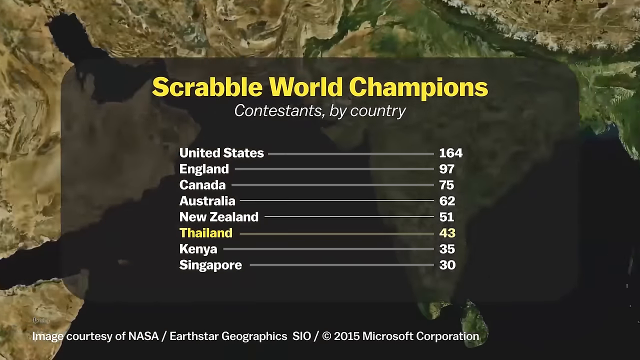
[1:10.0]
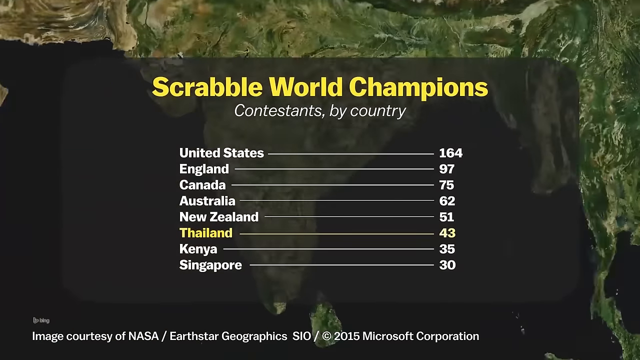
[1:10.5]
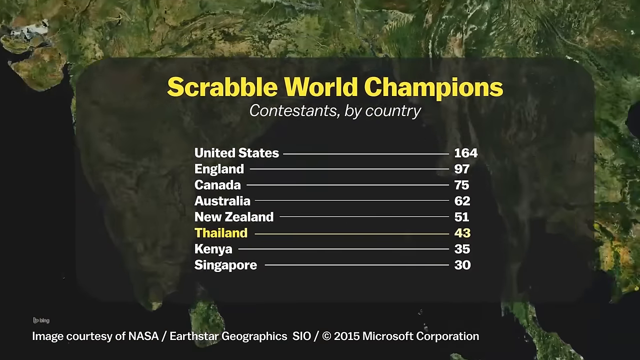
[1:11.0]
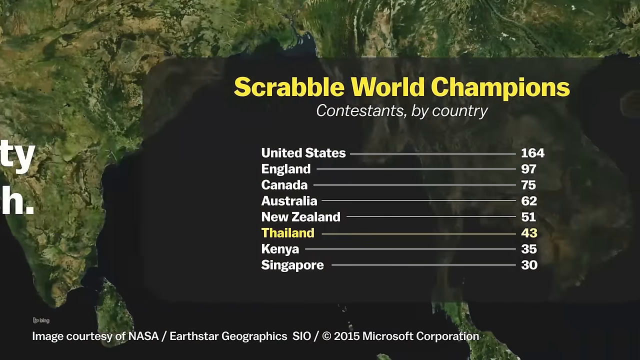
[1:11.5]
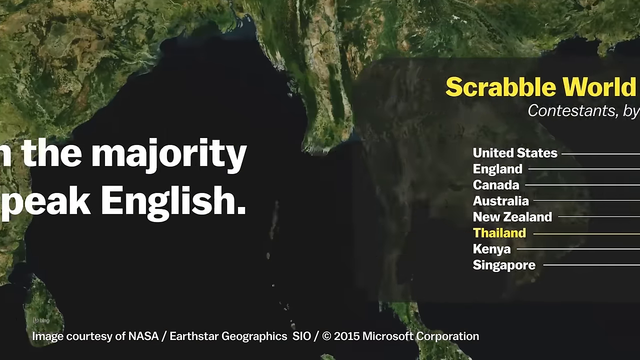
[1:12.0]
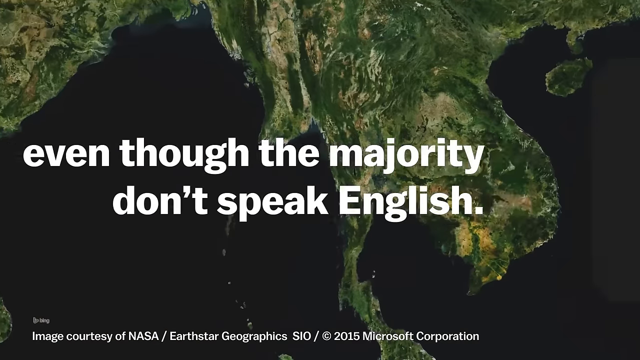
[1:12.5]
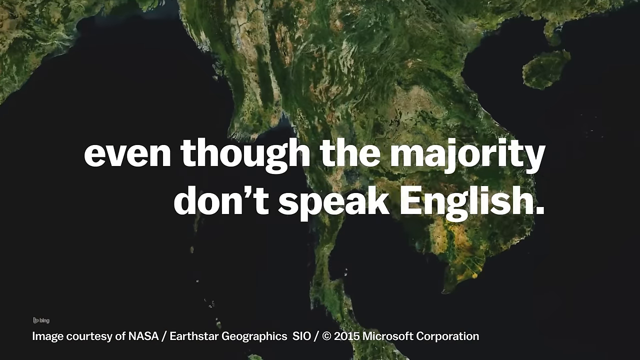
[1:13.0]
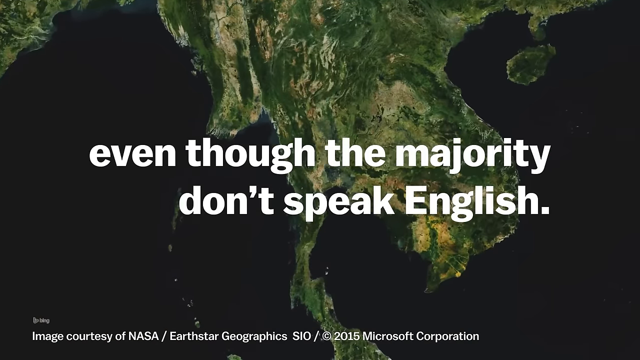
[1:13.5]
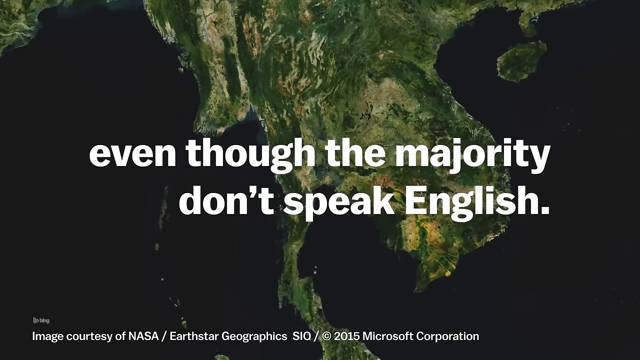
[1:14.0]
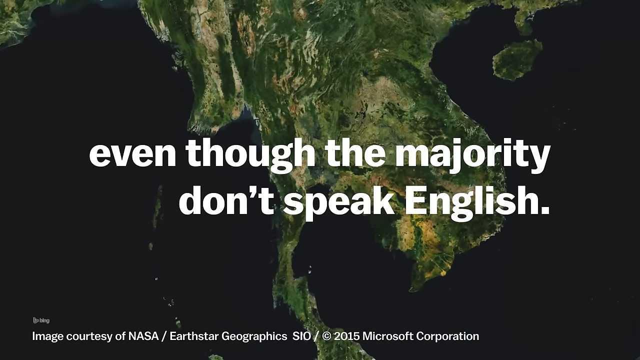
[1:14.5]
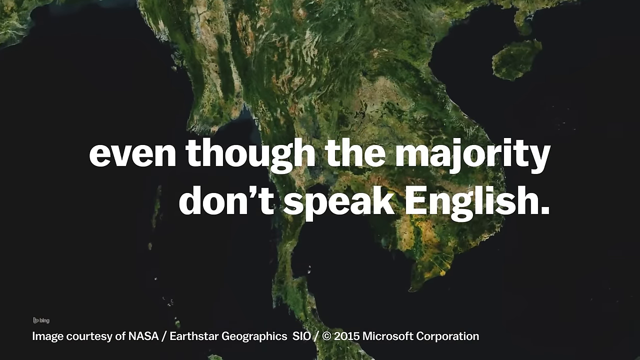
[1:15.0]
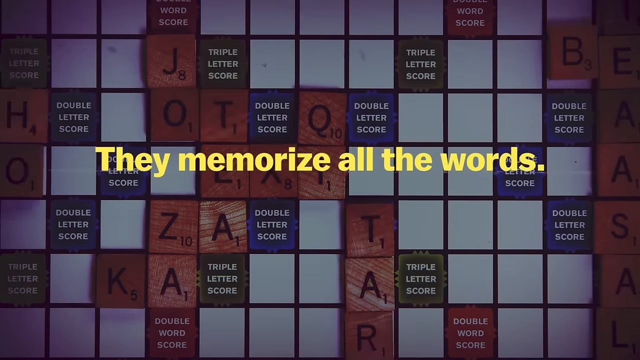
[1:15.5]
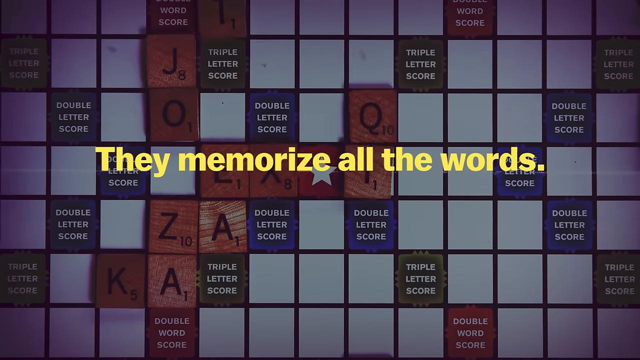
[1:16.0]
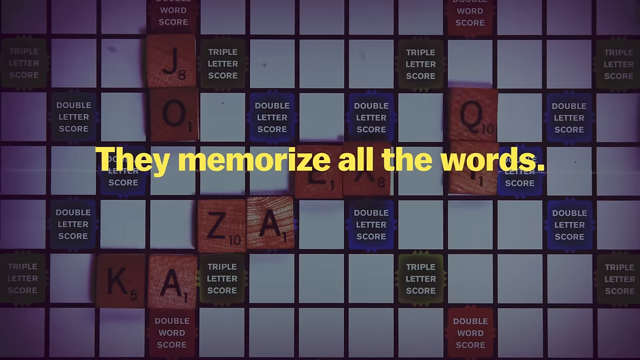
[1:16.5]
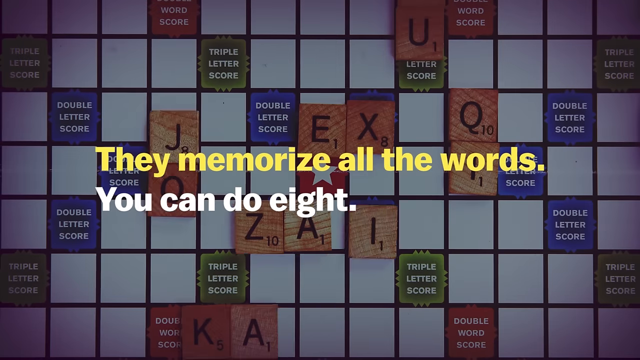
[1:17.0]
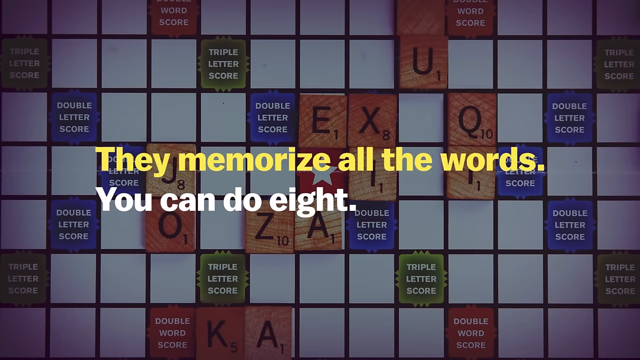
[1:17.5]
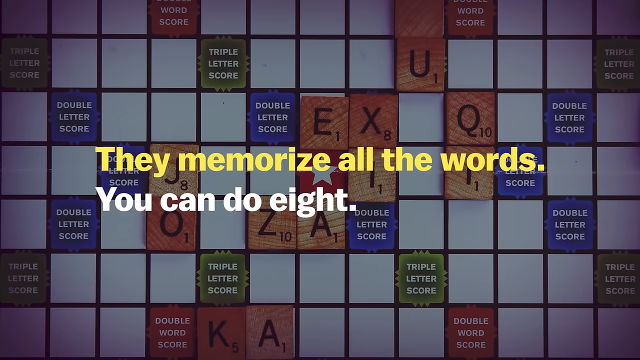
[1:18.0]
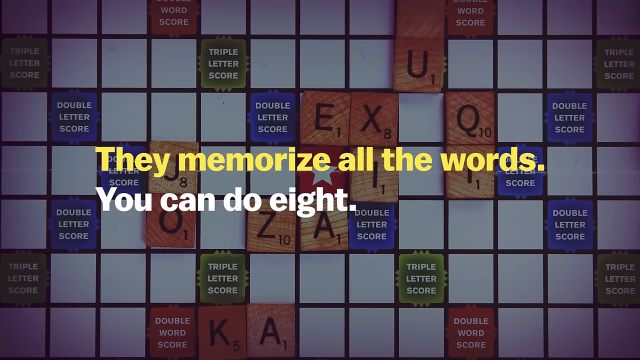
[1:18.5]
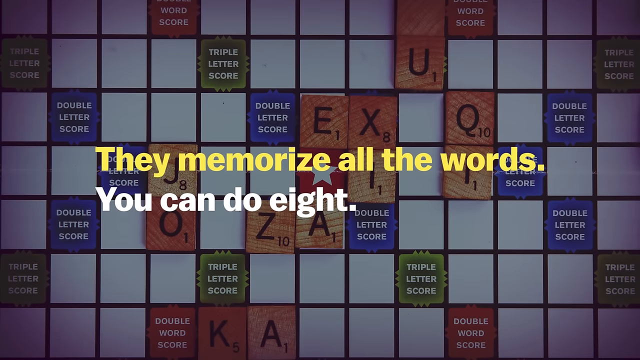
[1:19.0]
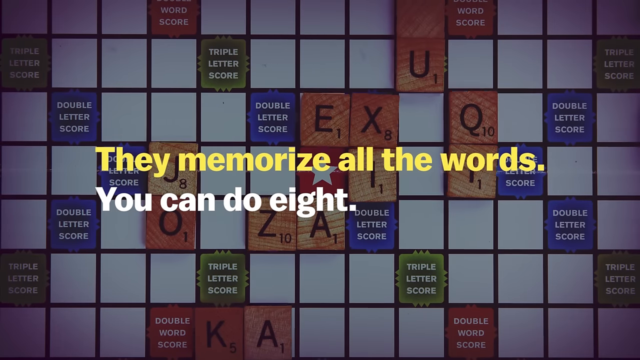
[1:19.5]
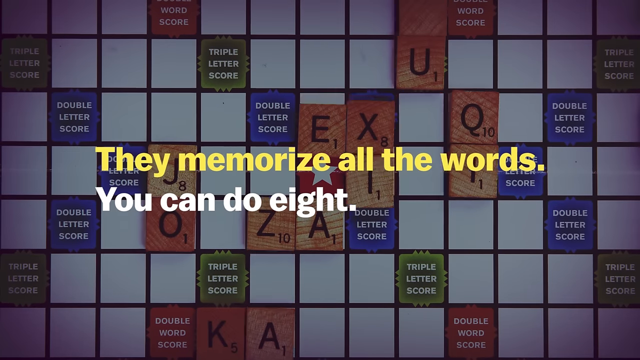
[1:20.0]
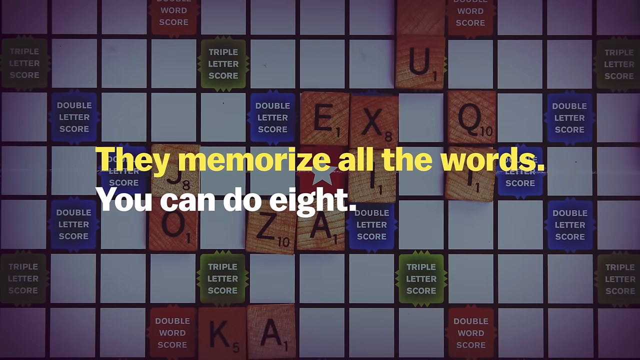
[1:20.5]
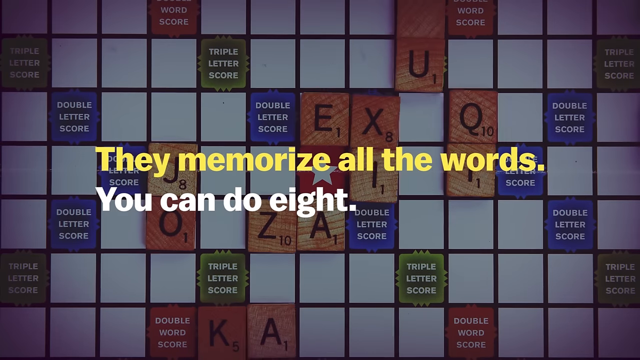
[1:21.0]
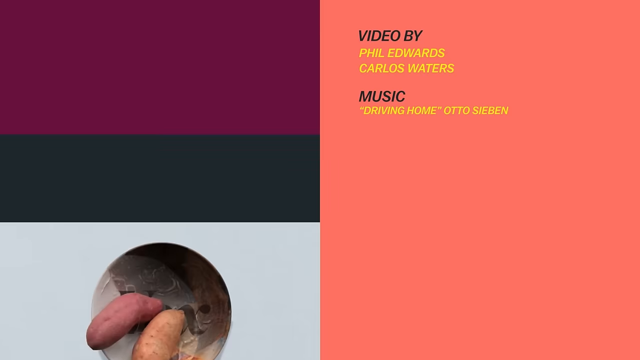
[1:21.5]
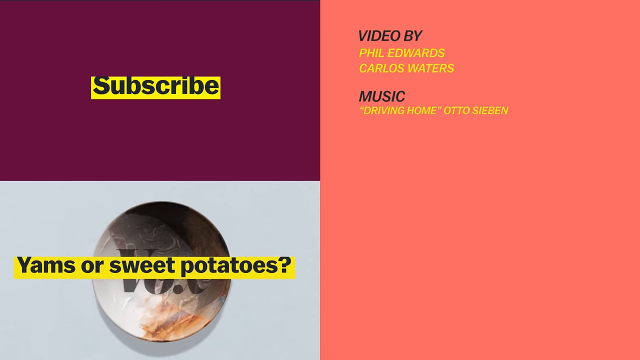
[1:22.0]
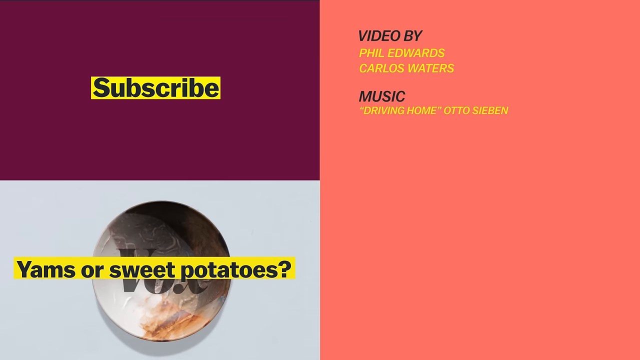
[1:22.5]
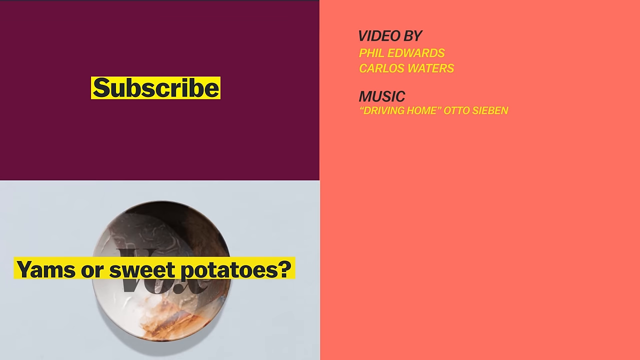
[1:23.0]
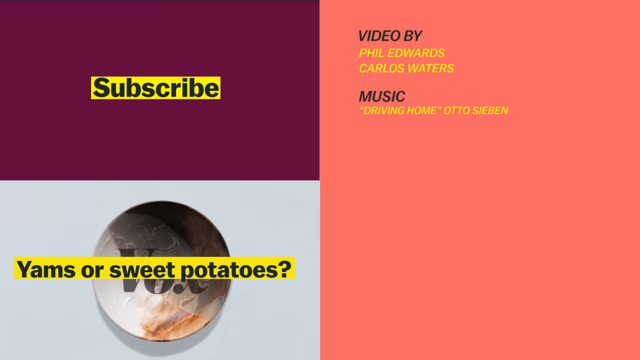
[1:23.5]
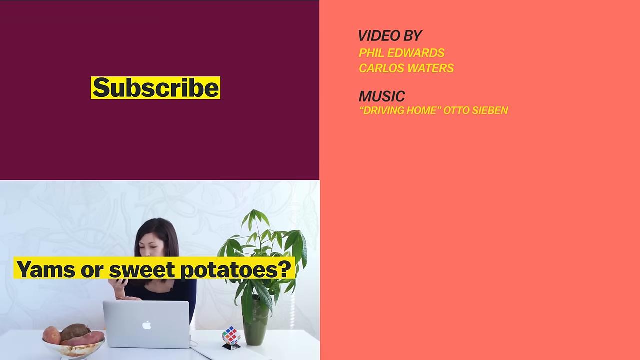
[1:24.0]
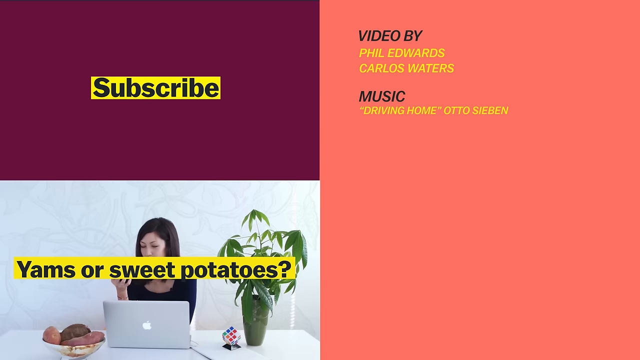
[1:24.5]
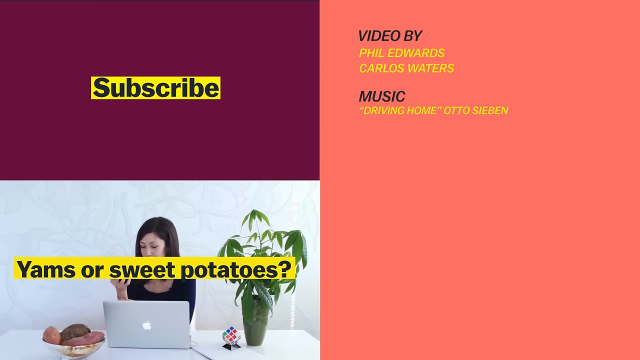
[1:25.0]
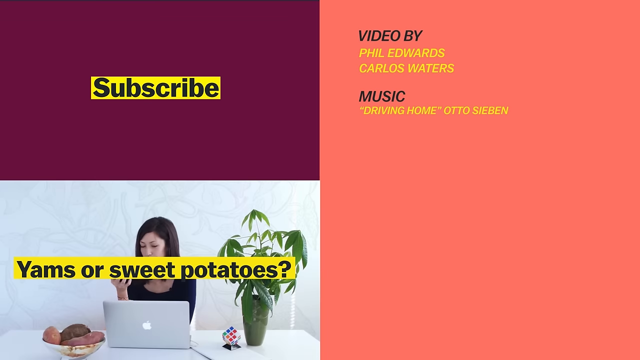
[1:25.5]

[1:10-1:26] The Scrabble World Champions information remains on screen, focusing on Thailand with 43, while the map in the background slowly zooms in toward Thailand. The video cuts to white text reading "even though the majority don't speak English," with text at the bottom reading "Image courtesy of NASA, Earth Star Geographics 2015." It then switches to a moving Scrabble board with yellow text reading "they memorize all the words. You can do eight." The video ends with "subscribe," "yams or sweet potatoes," and credits reading "video by Phil Edwards, Carlos Waters" and "music Driving Home Otto Sieben."